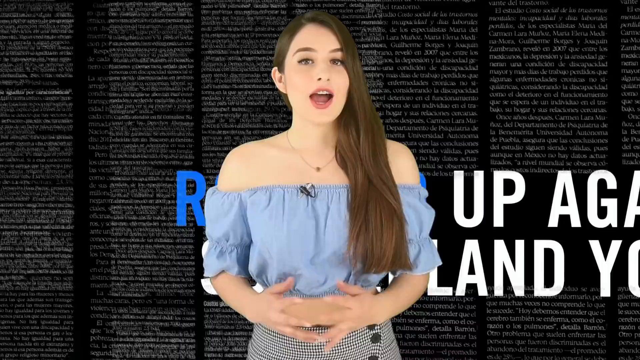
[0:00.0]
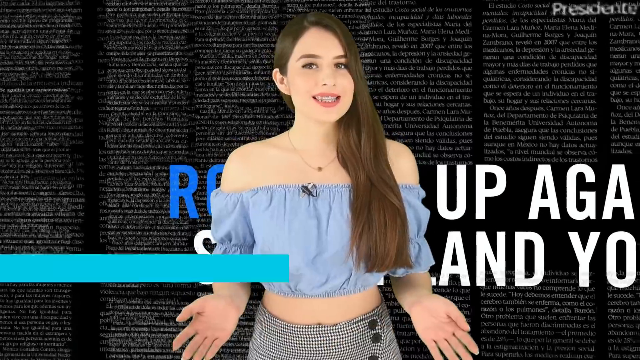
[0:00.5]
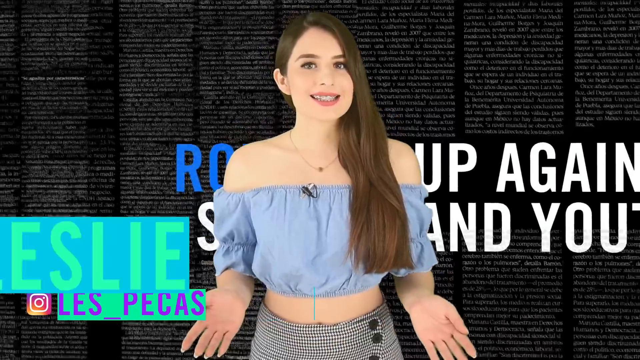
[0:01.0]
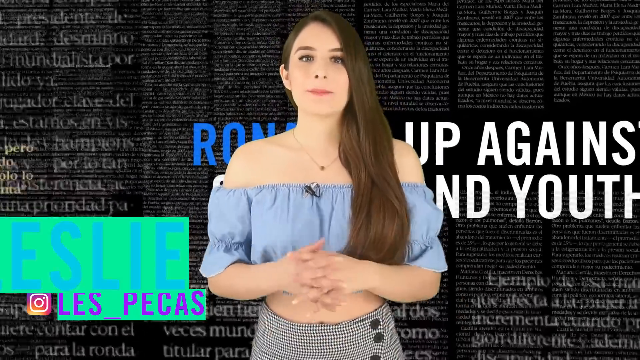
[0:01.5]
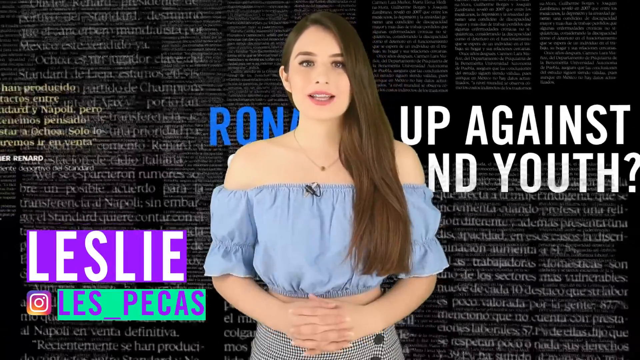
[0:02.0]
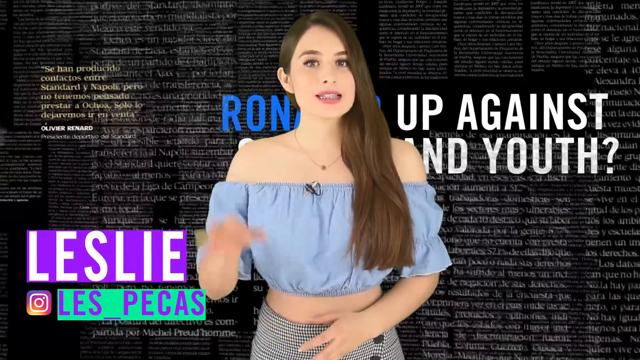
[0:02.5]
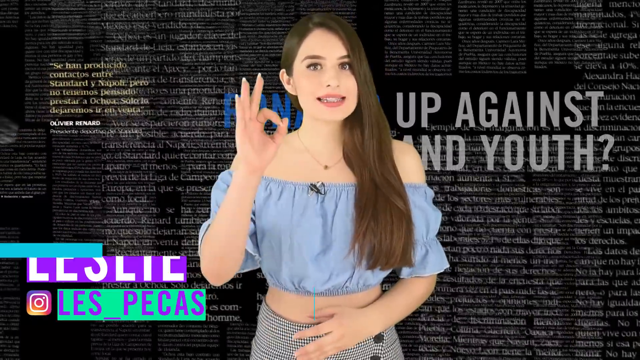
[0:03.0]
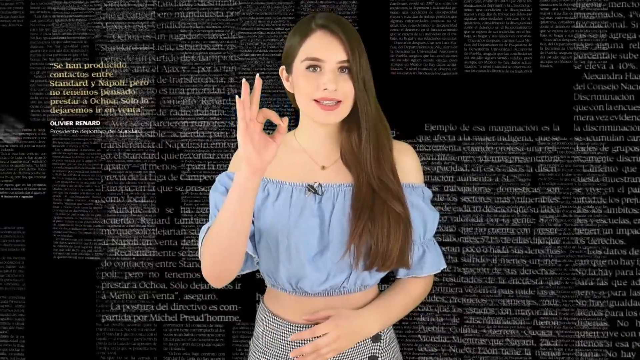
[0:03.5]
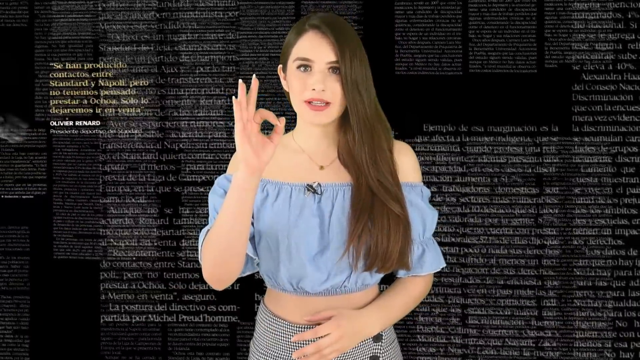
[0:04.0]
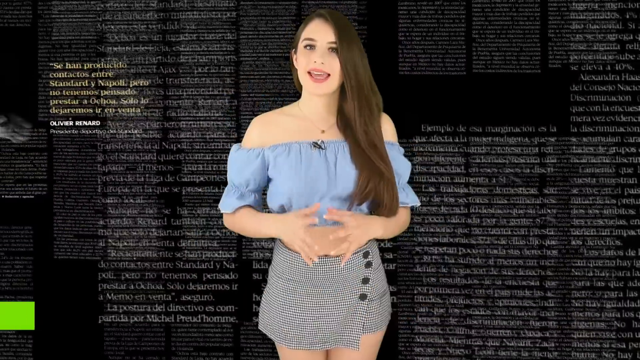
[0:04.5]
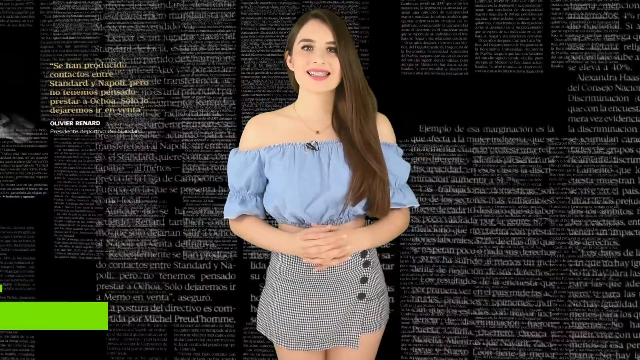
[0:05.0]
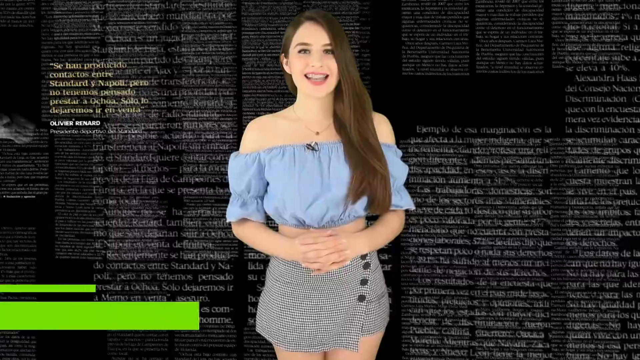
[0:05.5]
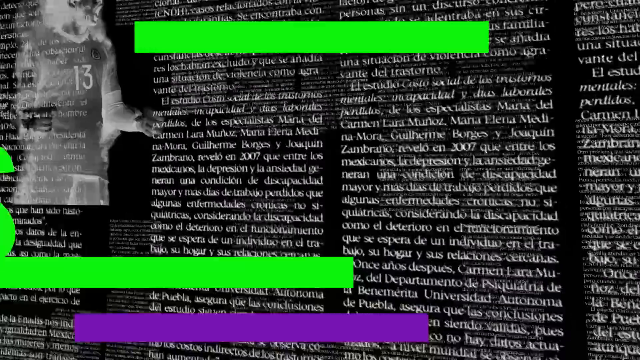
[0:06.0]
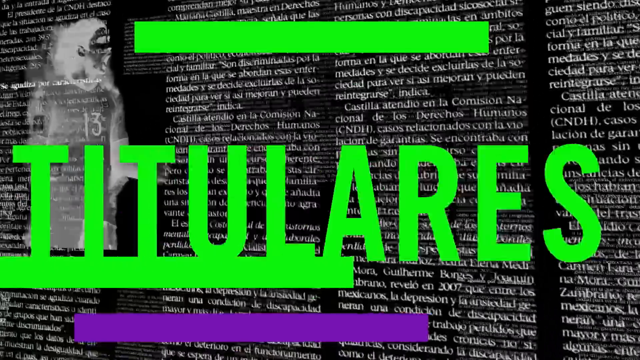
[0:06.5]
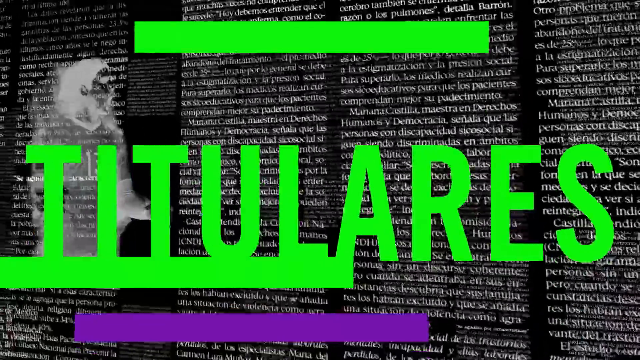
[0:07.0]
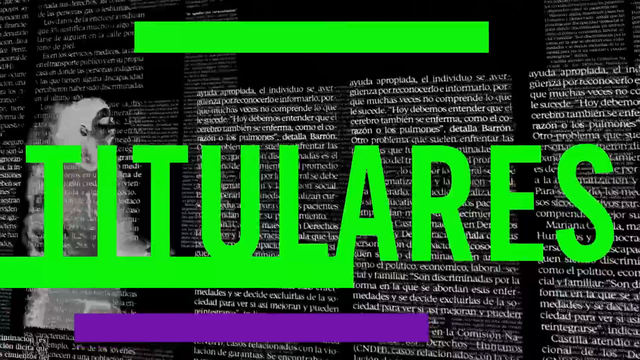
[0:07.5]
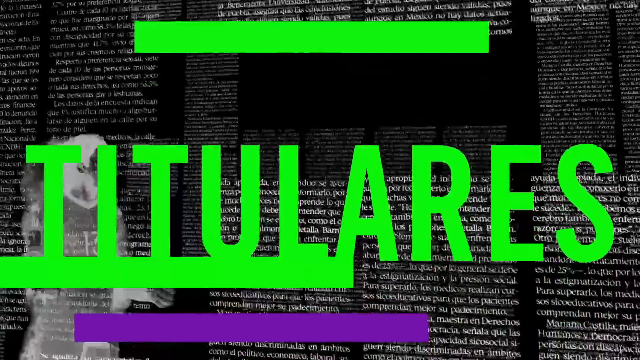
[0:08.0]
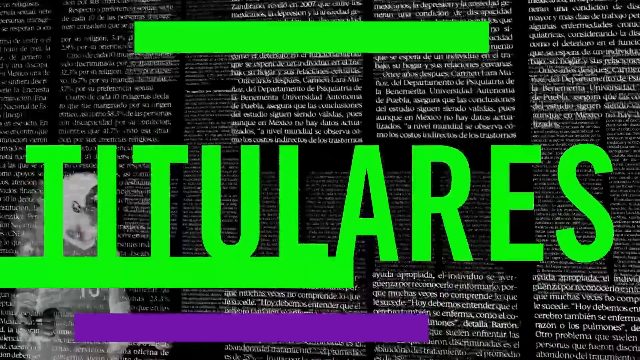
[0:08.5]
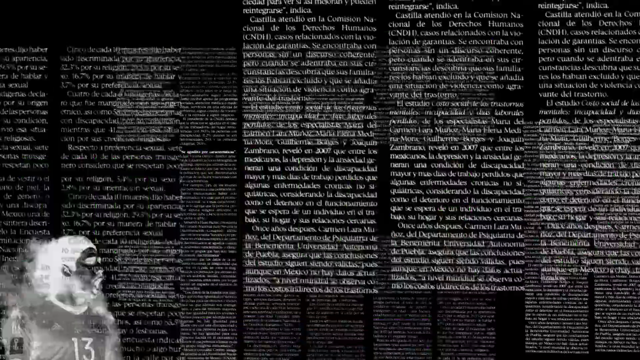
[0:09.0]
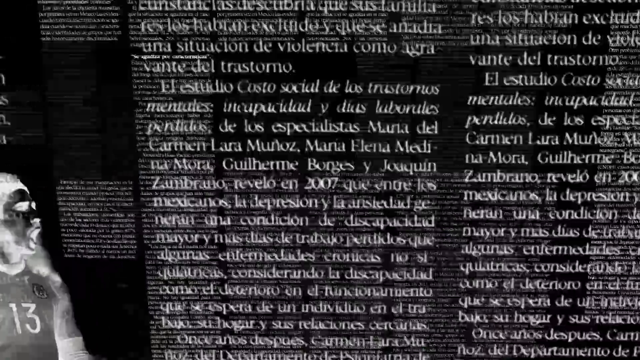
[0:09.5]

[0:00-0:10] A young woman appears at the start of the video, dressed in a blue, somewhat puffy top that leaves her shoulders bare; the light blue material goes over the middle of her torso, but her belly button is visible. She has long brown hair that hangs to her right side. An overlay in front of her gives her name, "Leslie", and below that reads "Les Pecas". Behind her is a lot of very small white text overlaid on black. Text superimposed over that smaller text says "up against youth", but she is standing in front of it, so some of the words are not visible. Another word pops up in light green: "Titulares". It disappears, and then there is a kind of close-up of some of the smaller text, focusing in very rapidly.